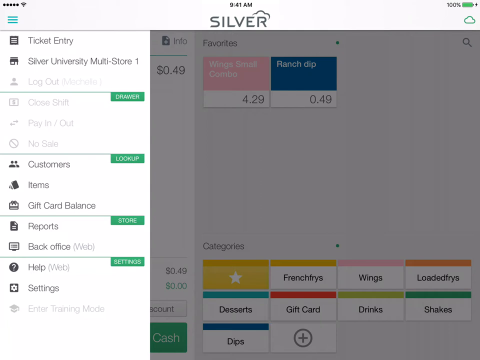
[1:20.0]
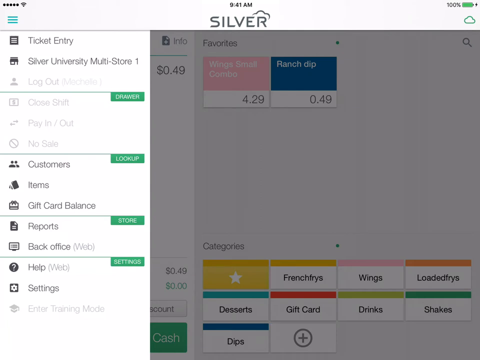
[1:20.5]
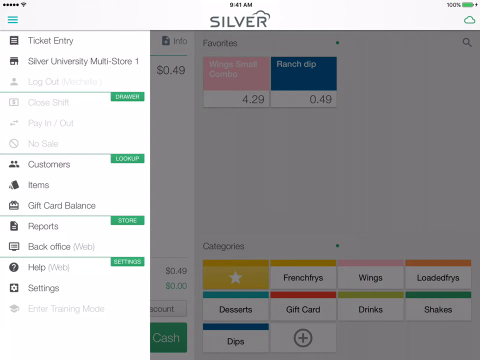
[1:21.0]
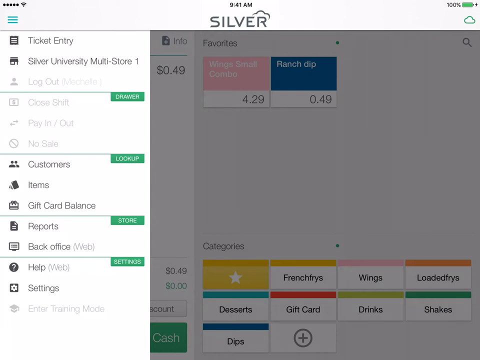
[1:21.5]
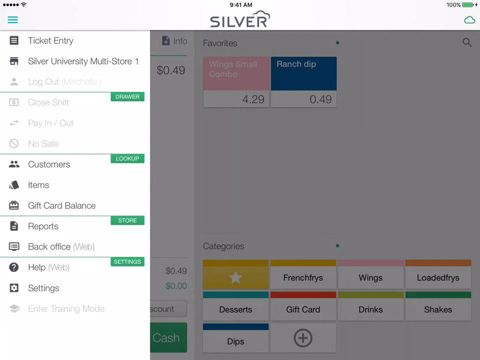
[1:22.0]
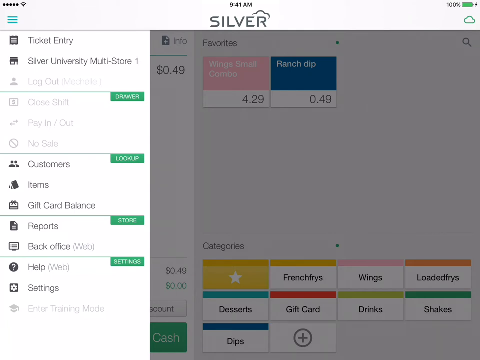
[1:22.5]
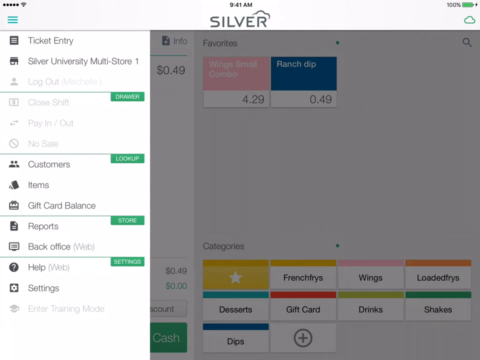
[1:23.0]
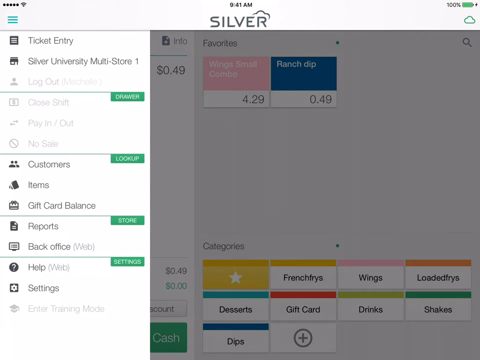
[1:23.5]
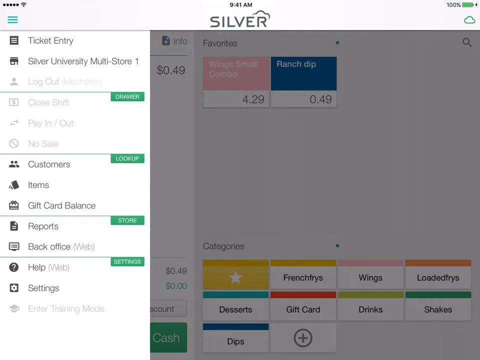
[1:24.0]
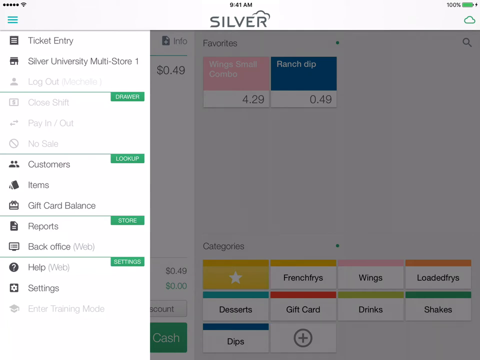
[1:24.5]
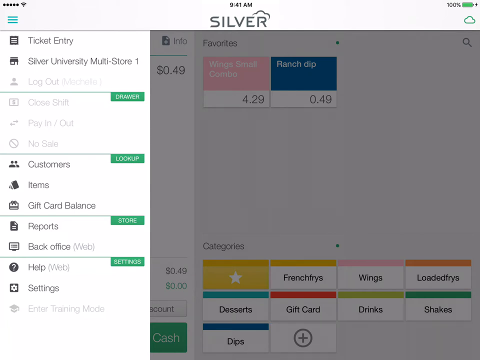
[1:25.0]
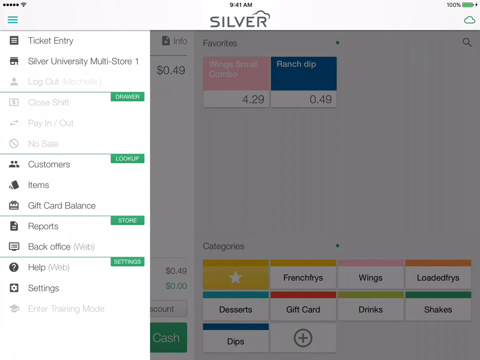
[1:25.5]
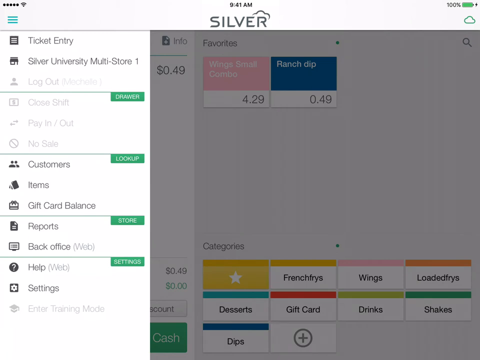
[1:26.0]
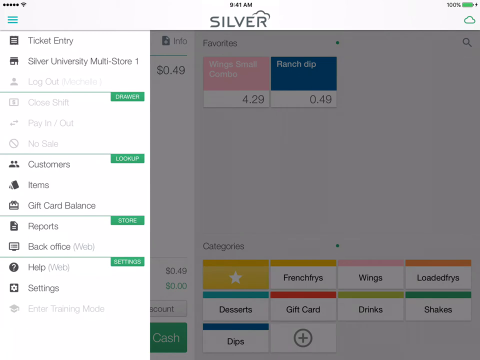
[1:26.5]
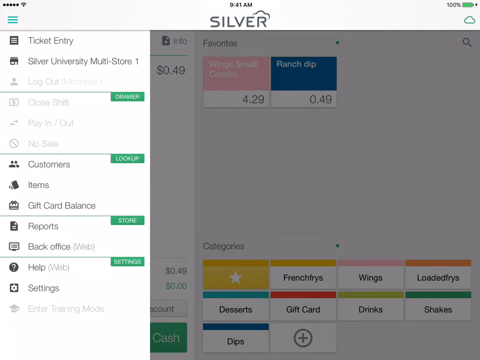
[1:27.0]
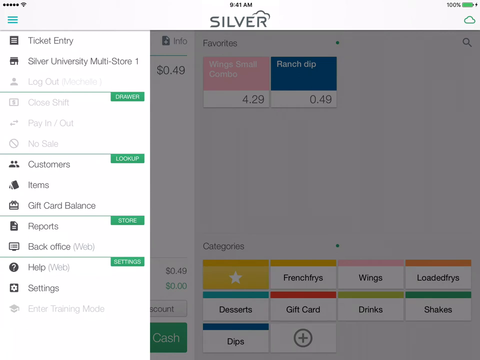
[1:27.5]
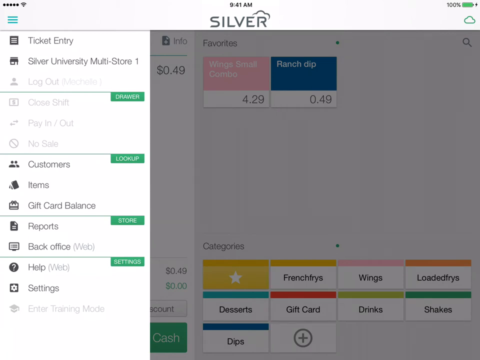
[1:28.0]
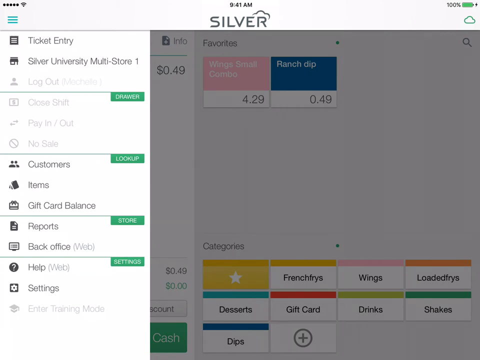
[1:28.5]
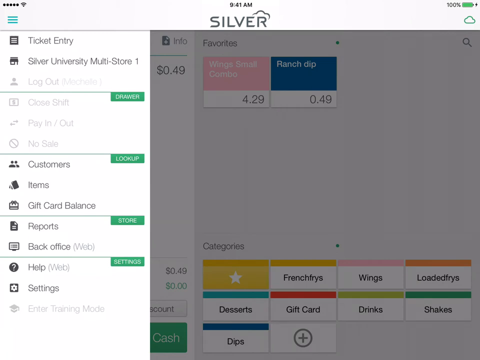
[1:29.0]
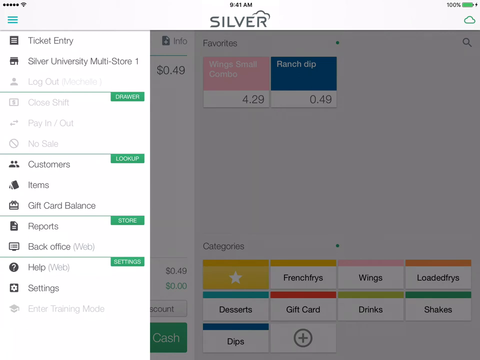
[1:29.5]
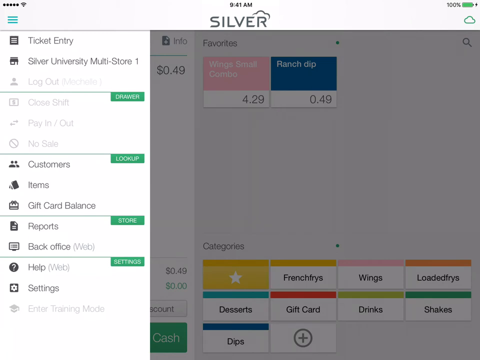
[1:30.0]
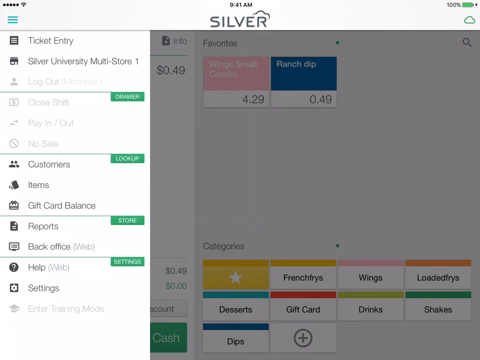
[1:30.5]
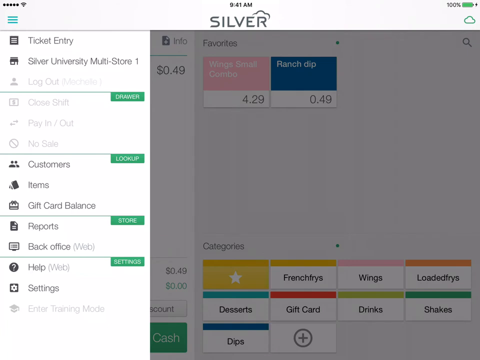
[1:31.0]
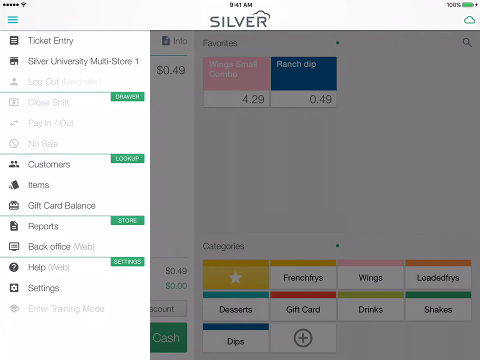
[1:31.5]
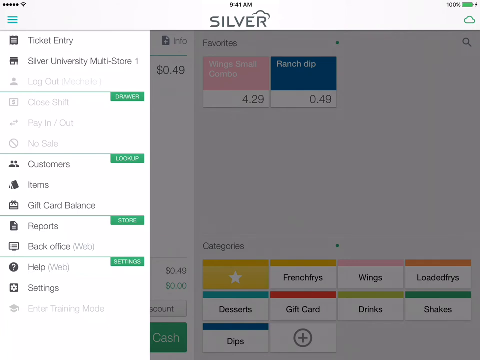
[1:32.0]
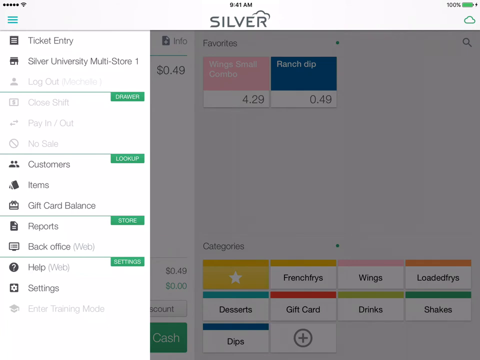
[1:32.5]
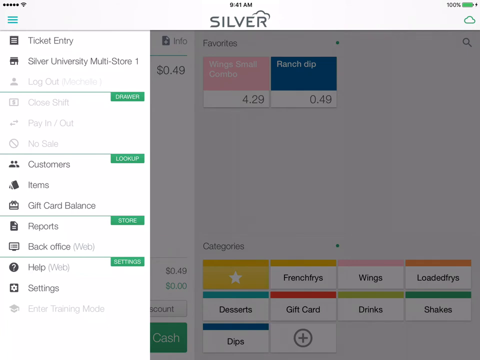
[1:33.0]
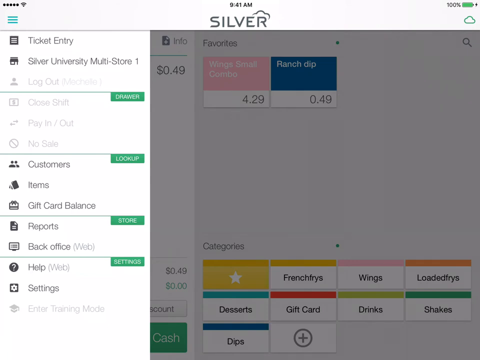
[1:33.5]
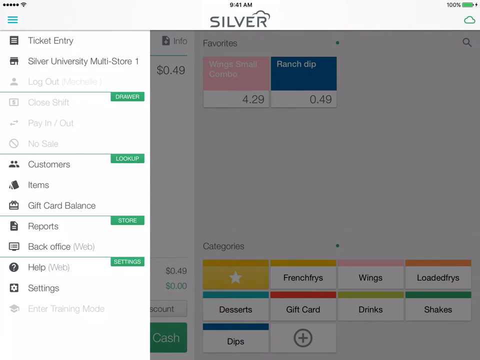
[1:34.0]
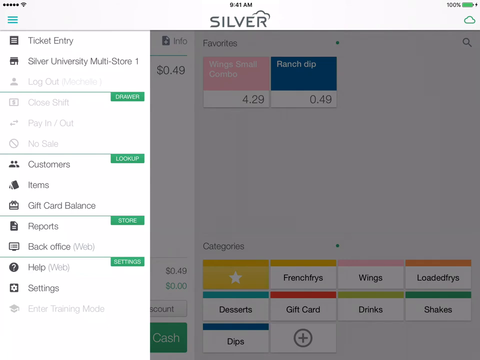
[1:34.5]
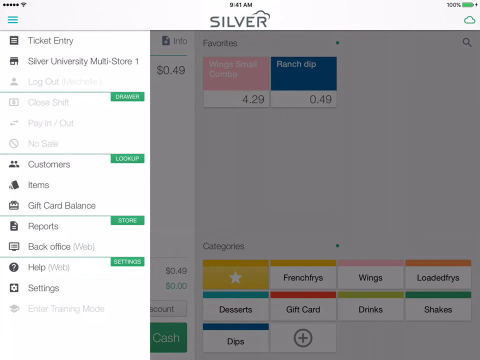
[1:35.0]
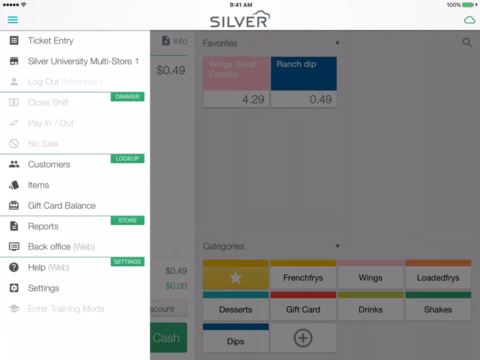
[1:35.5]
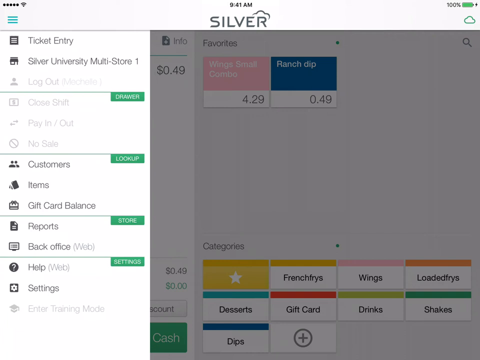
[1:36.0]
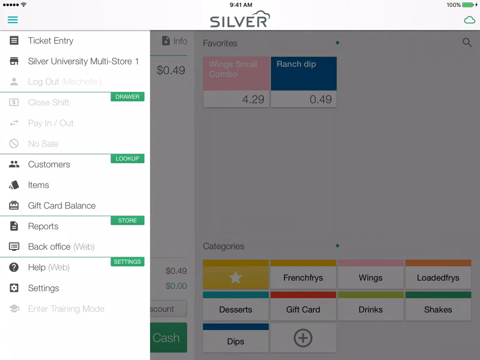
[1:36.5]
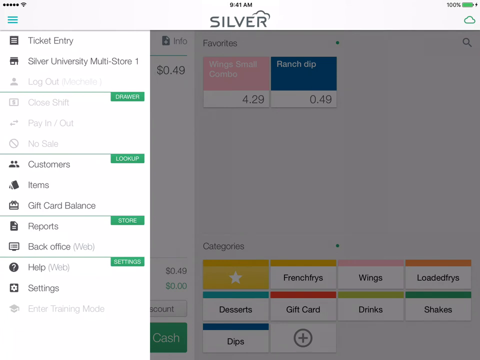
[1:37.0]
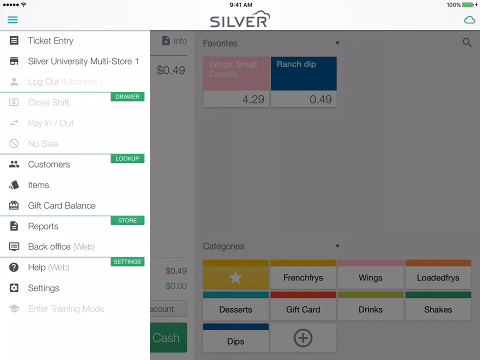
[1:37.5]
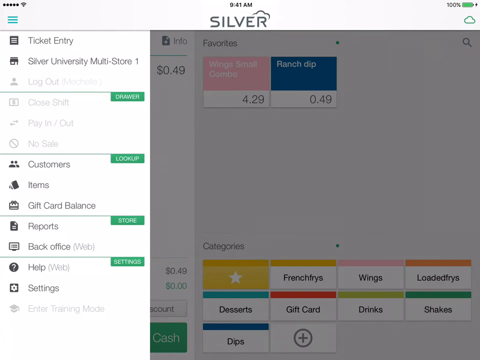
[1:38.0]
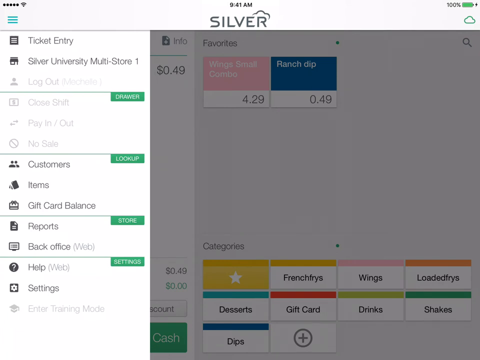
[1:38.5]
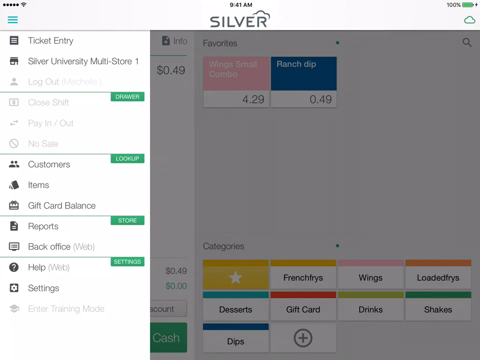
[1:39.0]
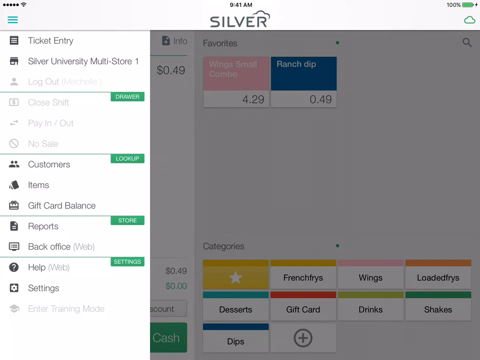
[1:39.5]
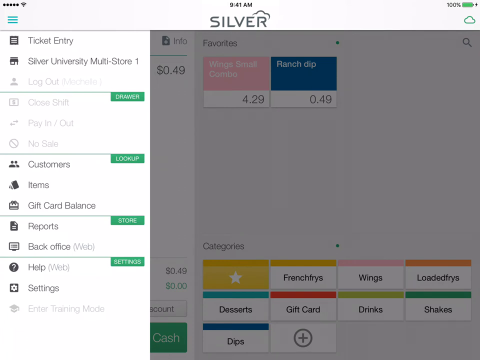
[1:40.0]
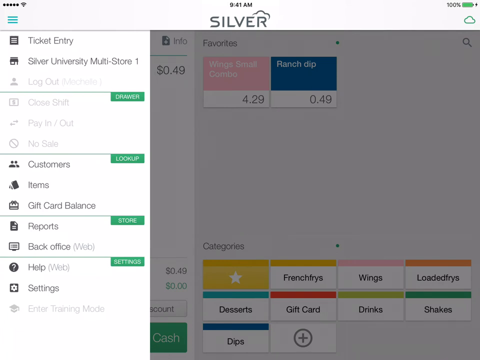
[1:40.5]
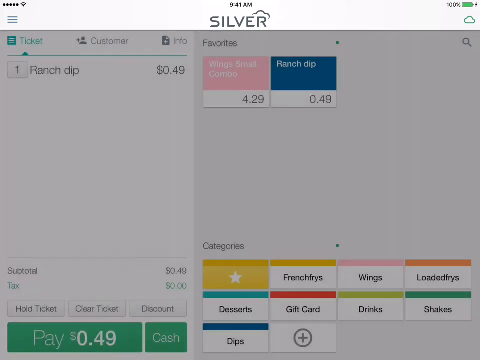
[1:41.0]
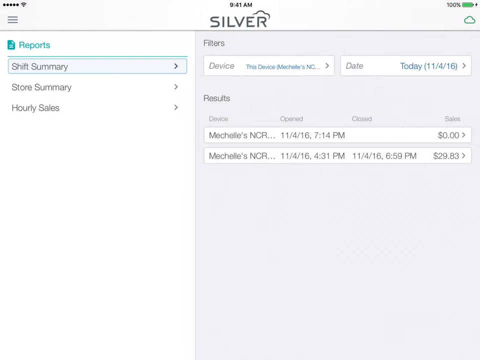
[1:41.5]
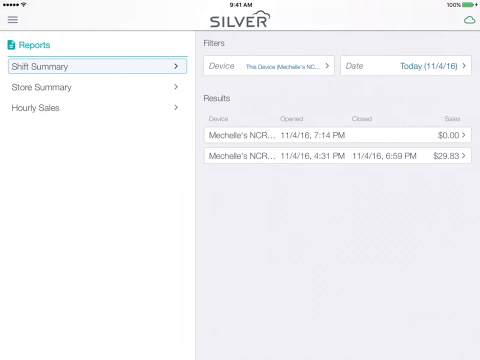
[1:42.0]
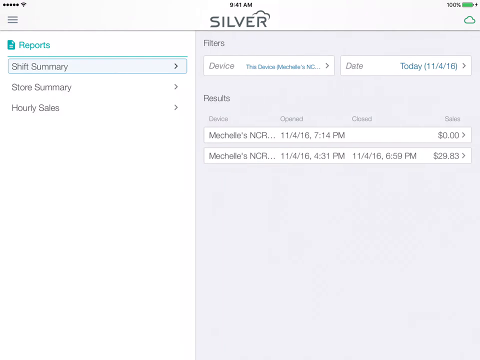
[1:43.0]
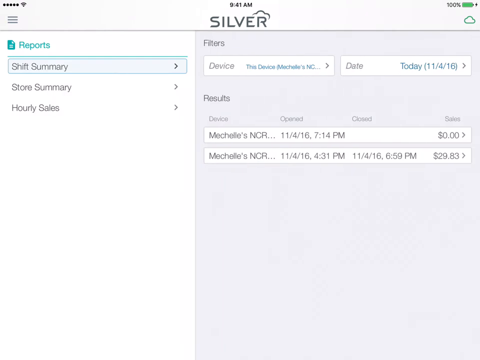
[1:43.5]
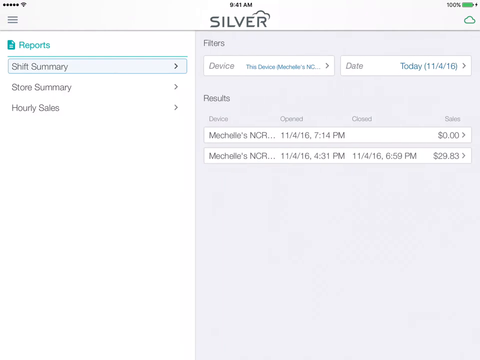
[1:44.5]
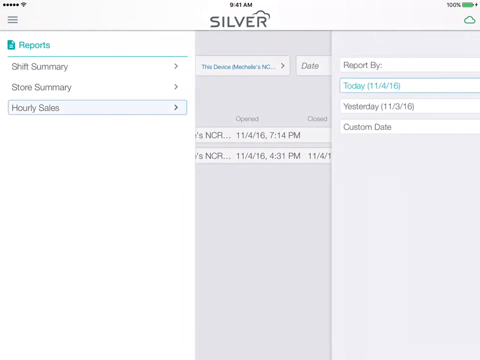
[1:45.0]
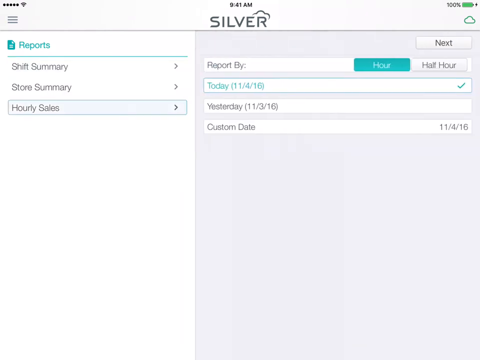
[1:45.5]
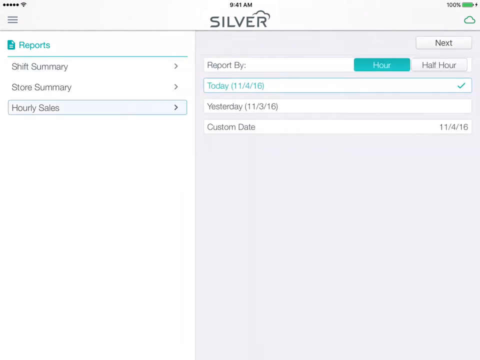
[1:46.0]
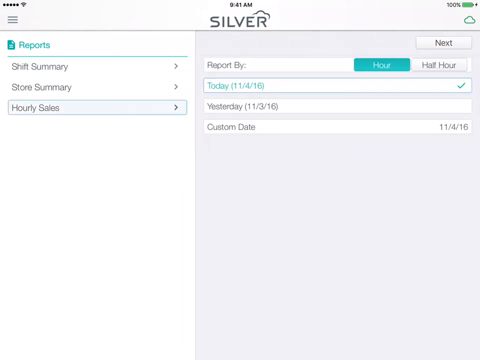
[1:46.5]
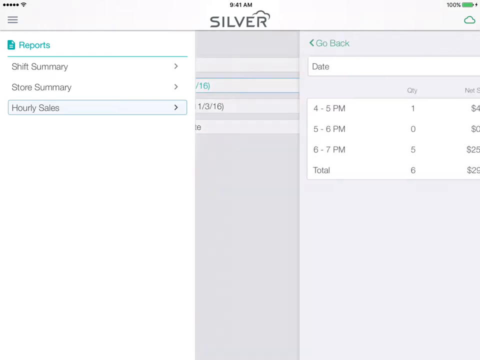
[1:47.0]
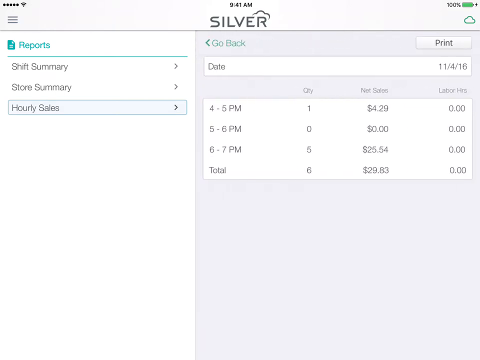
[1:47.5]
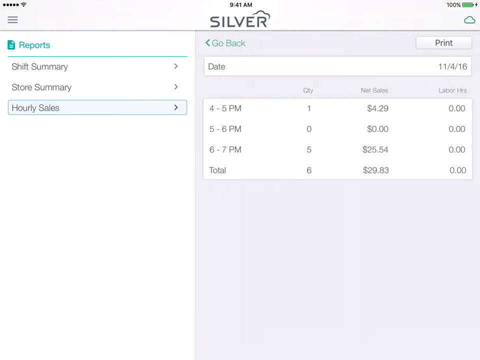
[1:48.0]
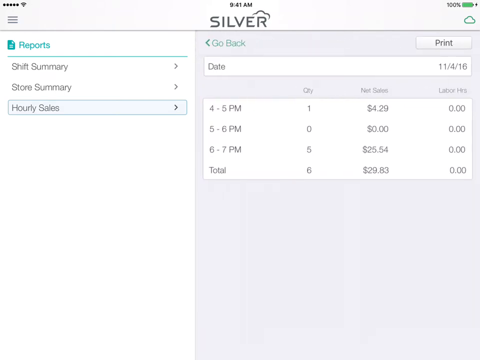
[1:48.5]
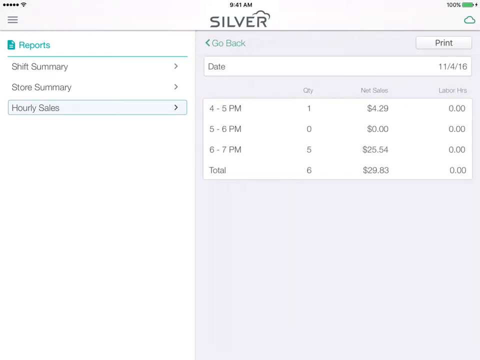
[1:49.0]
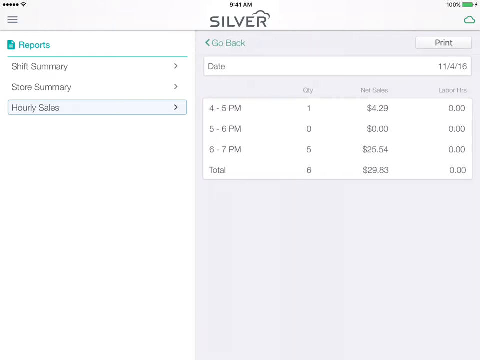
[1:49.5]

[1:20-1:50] The menu on the left of the Silver ordering system is still open, showing ticket entry and Silver University Multi-Store as options, along with clickable options at the bottom for customers, items, gift card, and reports. After idling for a while, the user appears to click reports, which changes the screen. The left side becomes a white field with "reports" in teal next to a little document icon, and three options: "shift summary", "store summary" and "hours sales". Shift summary is selected, with a rectangle around it, and on the right side a gray field shows the shift summary details, with filters and results. The user looks at this for a few seconds, then goes down to hourly sales, which has fields for today, yesterday and entering a date. They then click something else, apparently a next button, which shows more details about times, quantities, sales and labor hours.